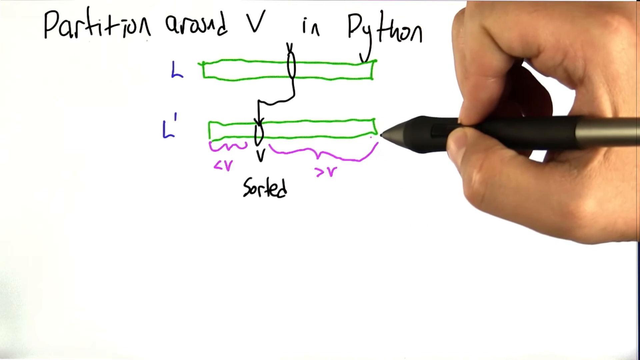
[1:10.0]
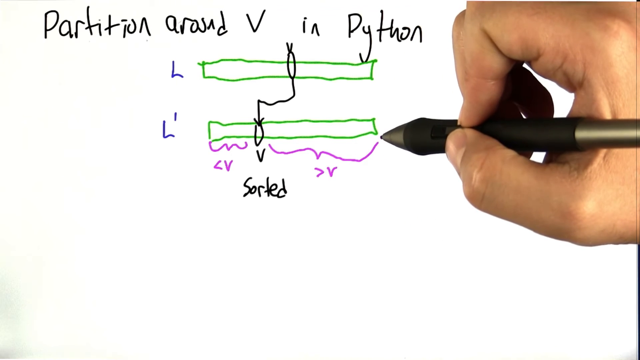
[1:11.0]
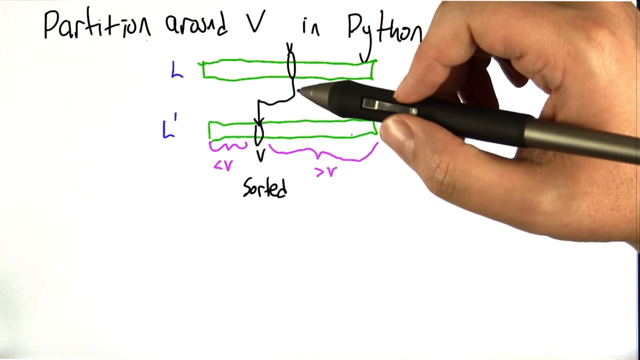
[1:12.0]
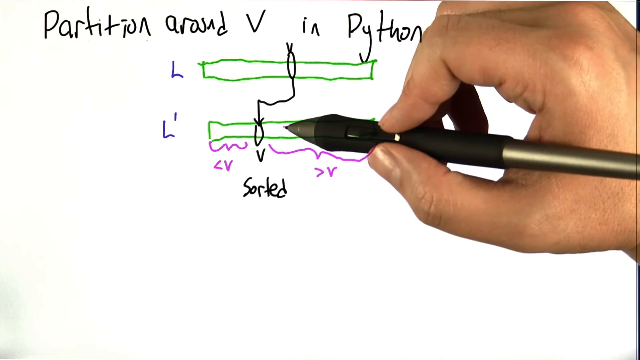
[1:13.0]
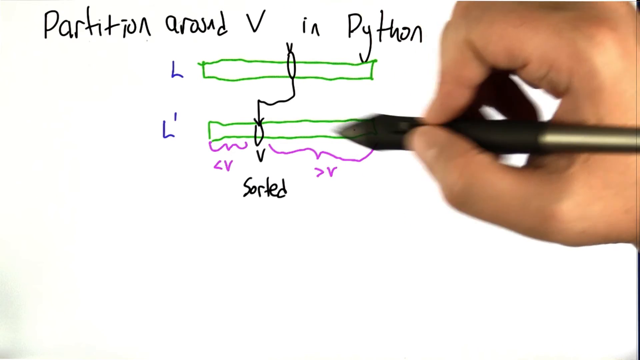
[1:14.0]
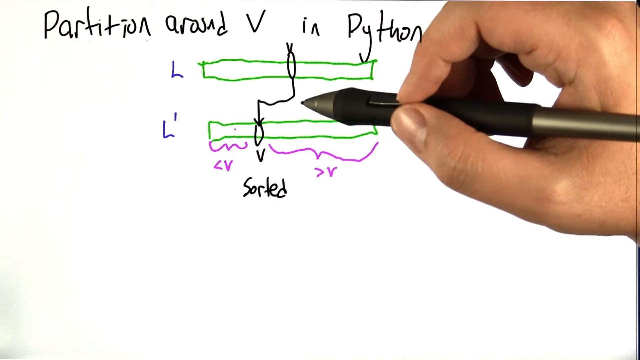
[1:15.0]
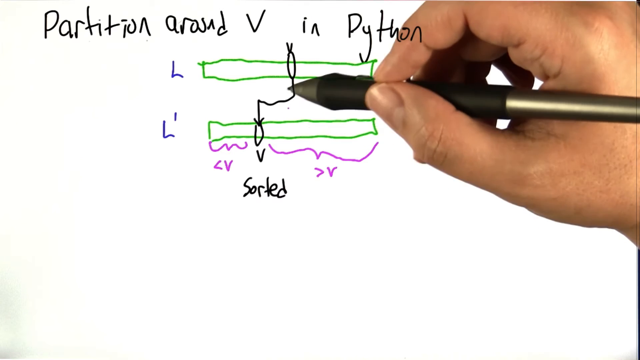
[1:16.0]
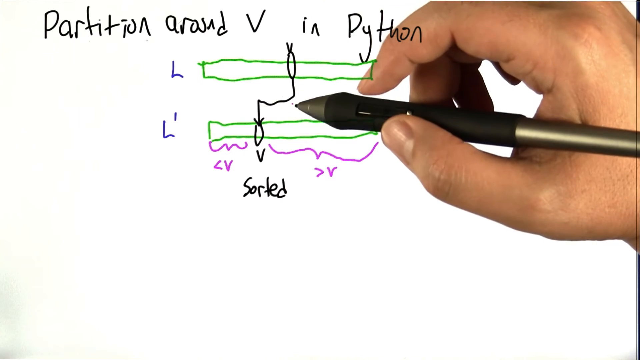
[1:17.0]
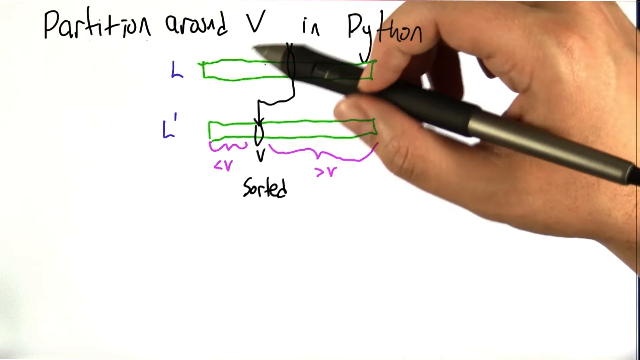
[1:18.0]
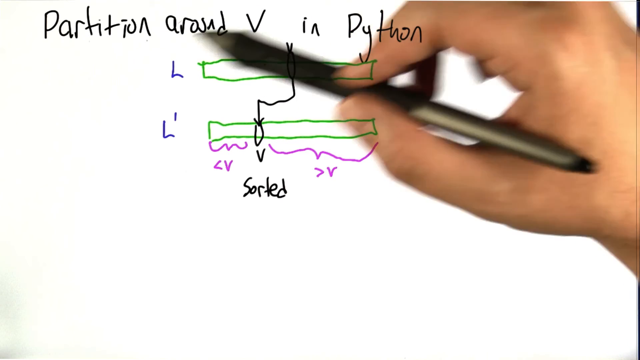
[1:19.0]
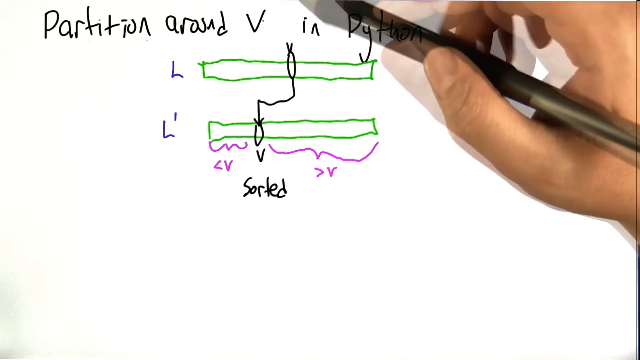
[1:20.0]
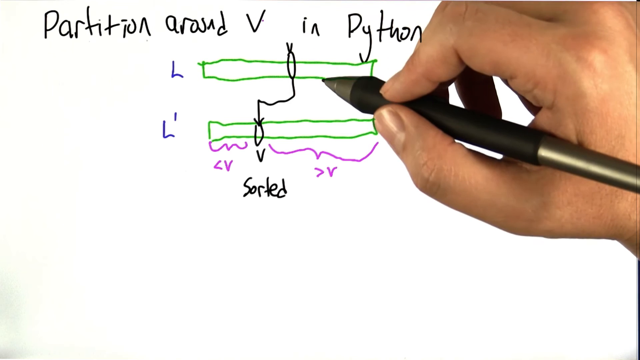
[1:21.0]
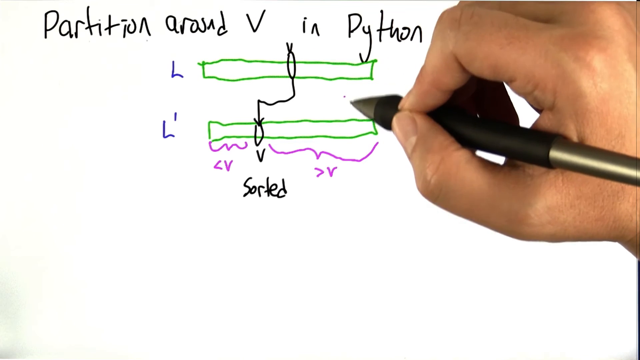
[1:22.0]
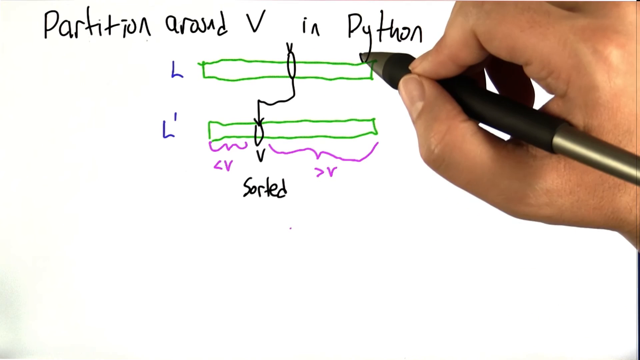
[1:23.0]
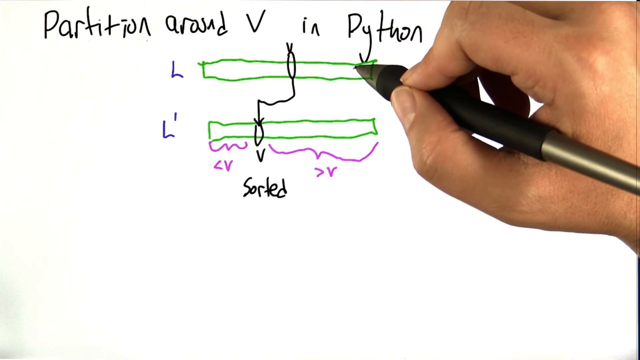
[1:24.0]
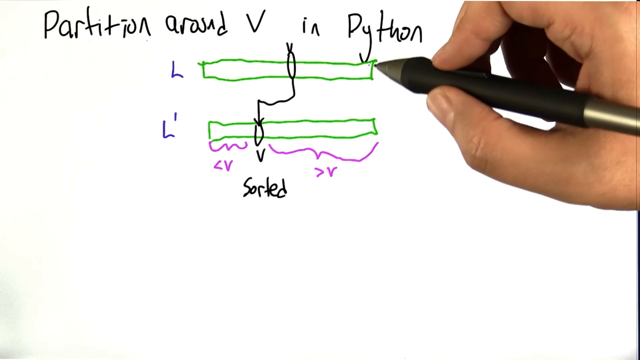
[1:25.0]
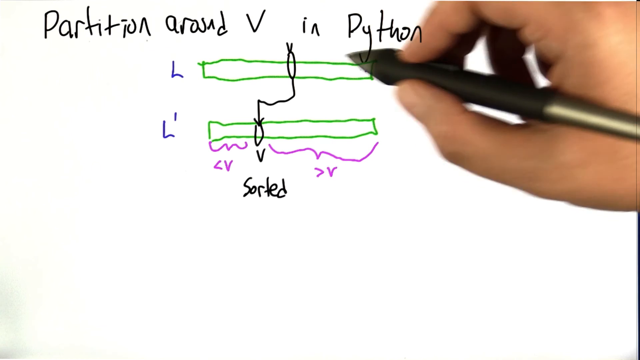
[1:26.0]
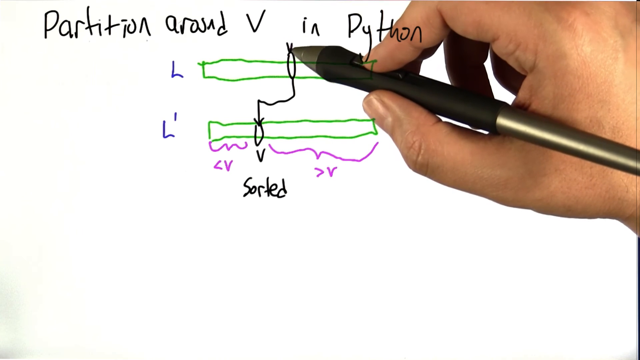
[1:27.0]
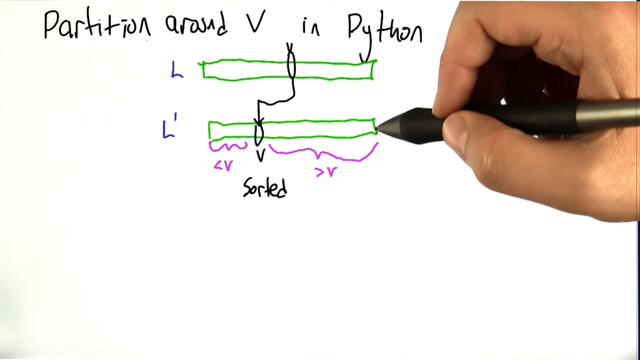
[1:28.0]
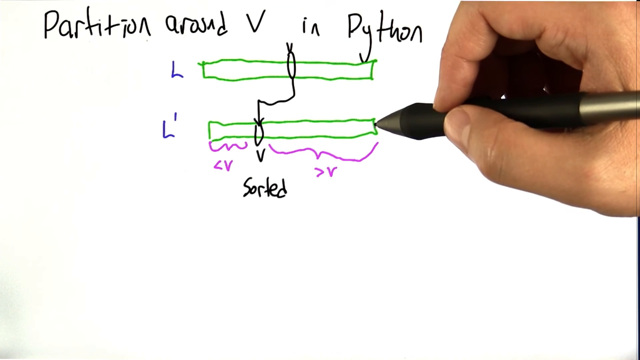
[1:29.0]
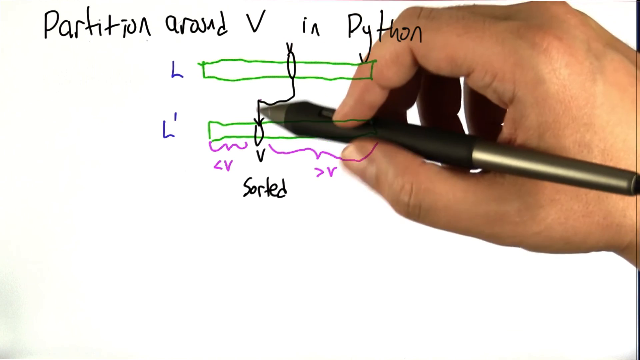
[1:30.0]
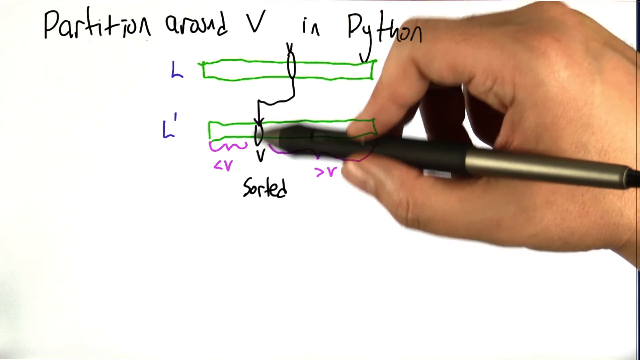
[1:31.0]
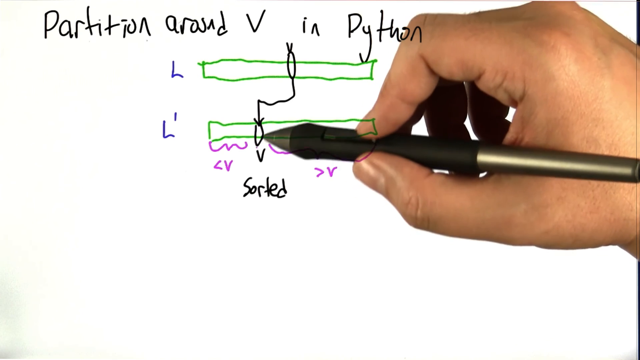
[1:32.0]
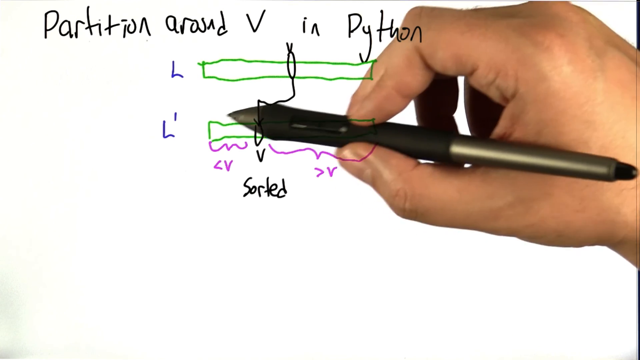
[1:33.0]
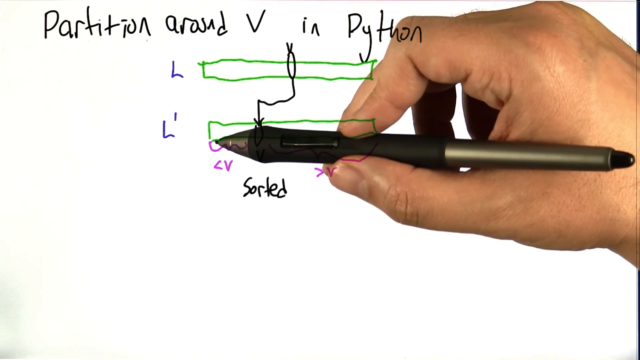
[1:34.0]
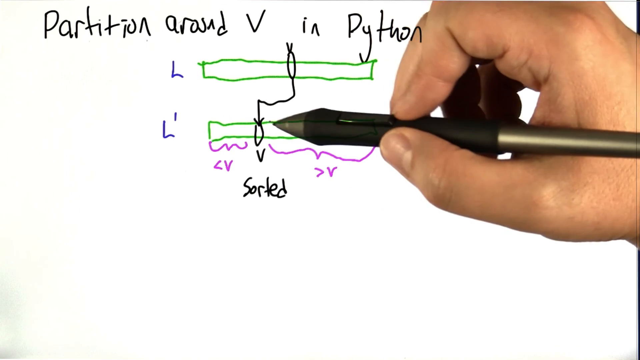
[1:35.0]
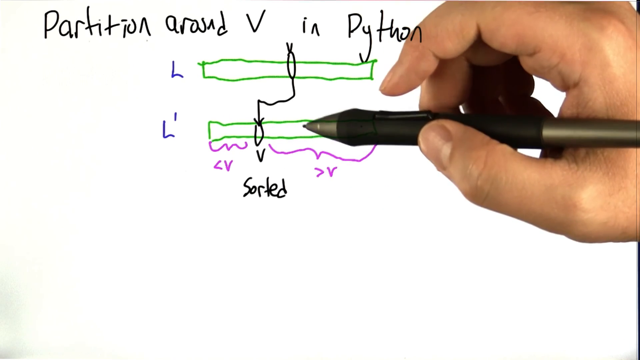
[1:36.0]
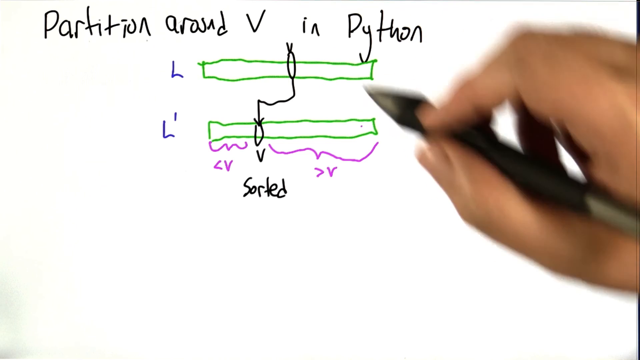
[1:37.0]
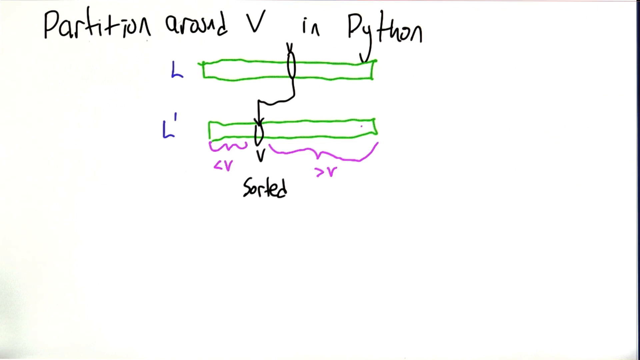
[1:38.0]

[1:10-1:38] A hand holding a pen is on the right side of the screen, in what looks like Paint. "partition around V in Python" is written in black at the top. Beneath it is a blue L with a green rectangle next to it, and under that another blue L with an apostrophe and another green rectangle. A circle sits about halfway into the first L rectangle and another about 30% of the way into the L apostrophe rectangle, with lines connecting the two circles. On the L apostrophe rectangle, the part before the circle is labeled "less than V" and the part to the right is labeled "greater than V", both in pink. The connected circles are labeled "sorted". The pen moves from the right side of the L apostrophe rectangle, seemingly explaining that rectangle, then points to the title. It keeps going to each of the rectangles over and over, apparently explaining everything in the picture.